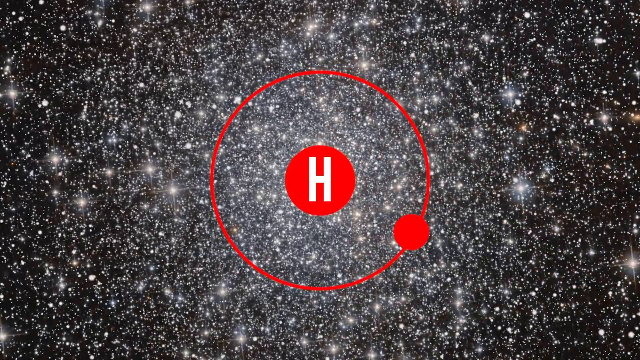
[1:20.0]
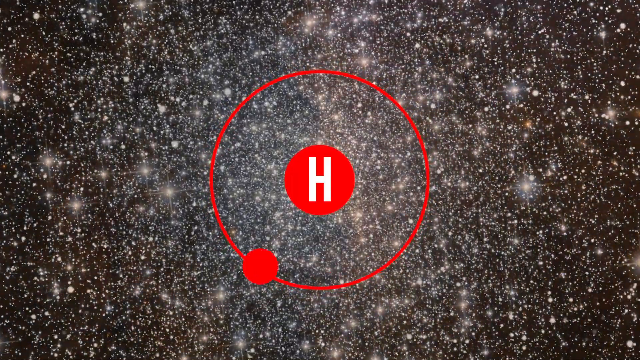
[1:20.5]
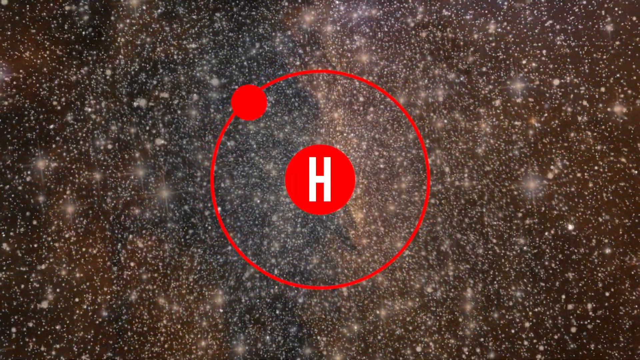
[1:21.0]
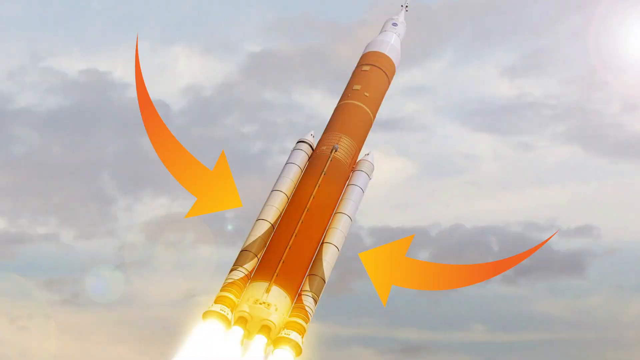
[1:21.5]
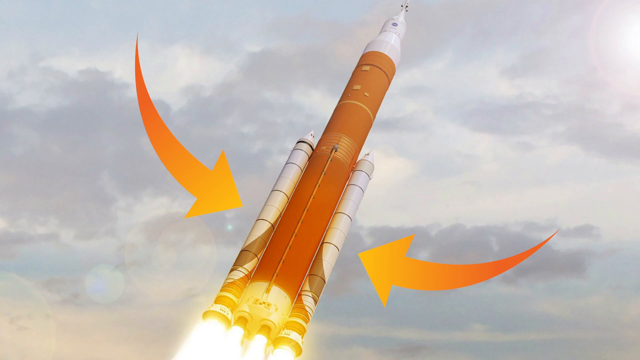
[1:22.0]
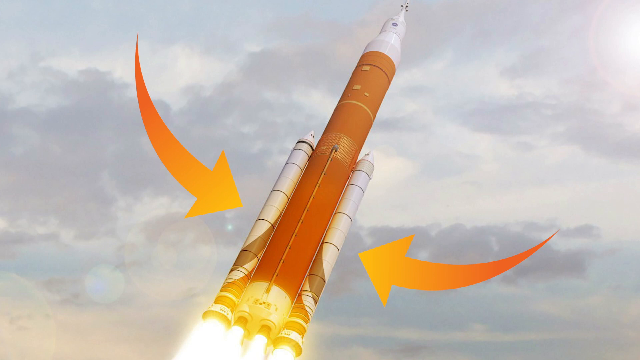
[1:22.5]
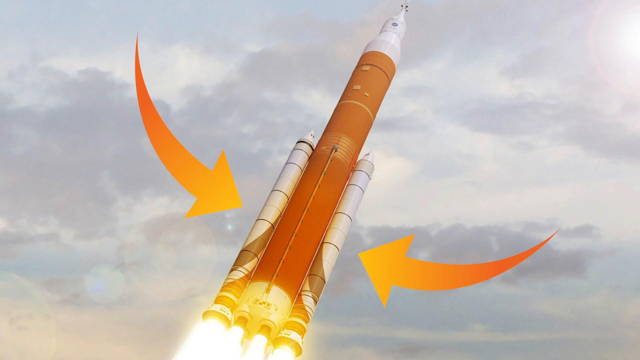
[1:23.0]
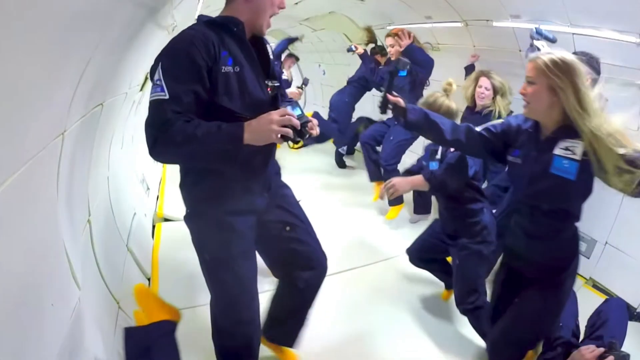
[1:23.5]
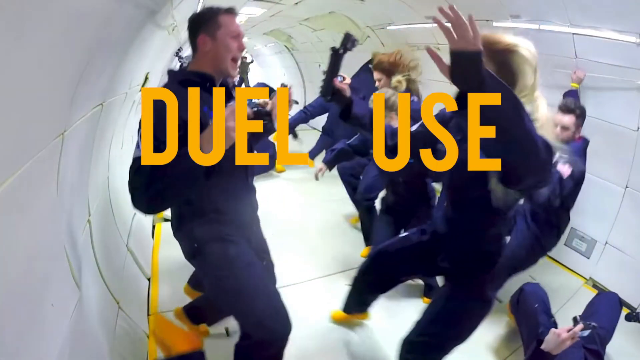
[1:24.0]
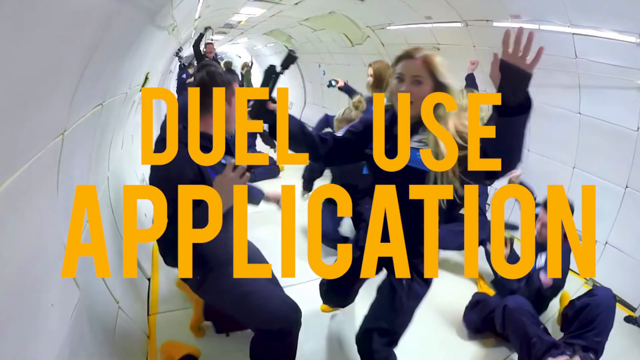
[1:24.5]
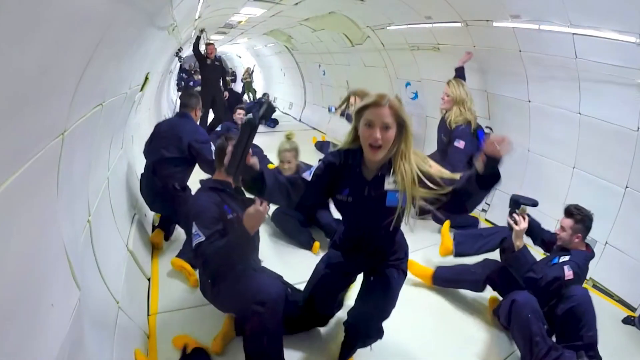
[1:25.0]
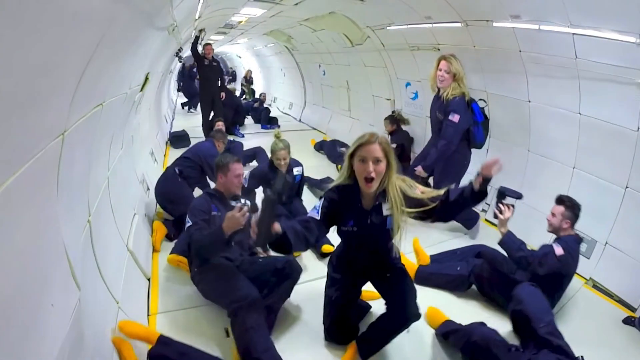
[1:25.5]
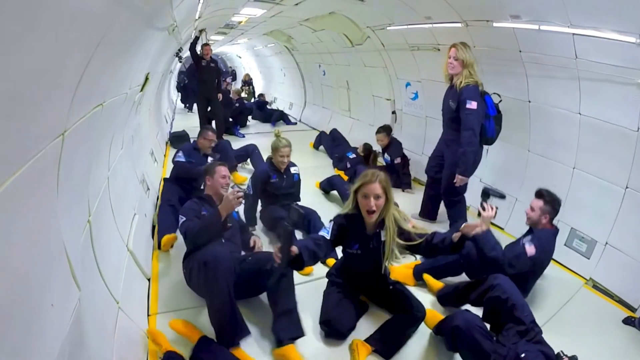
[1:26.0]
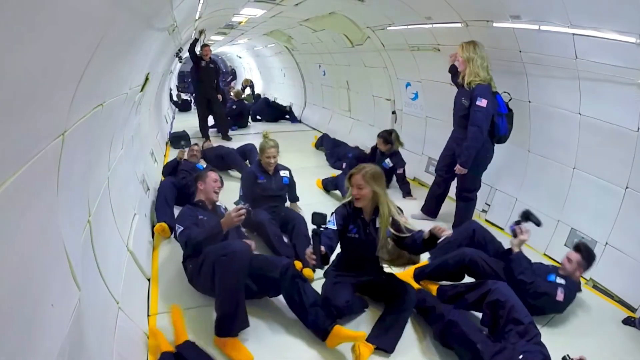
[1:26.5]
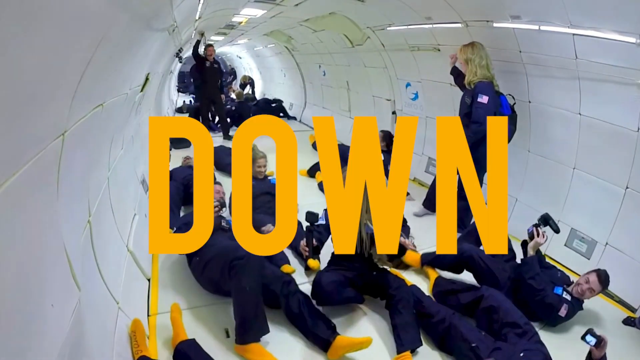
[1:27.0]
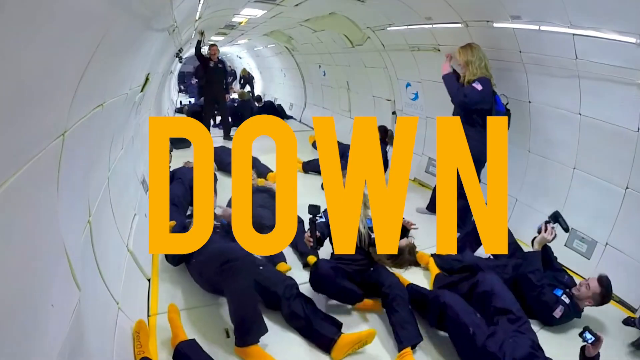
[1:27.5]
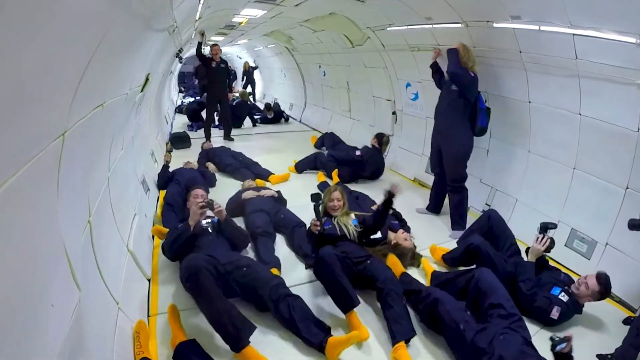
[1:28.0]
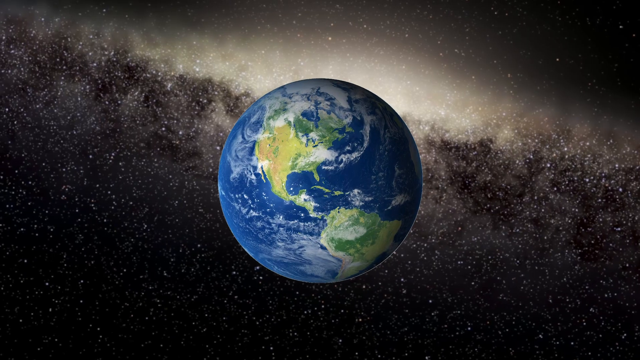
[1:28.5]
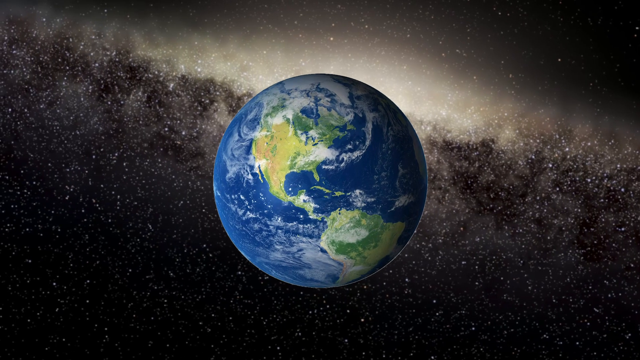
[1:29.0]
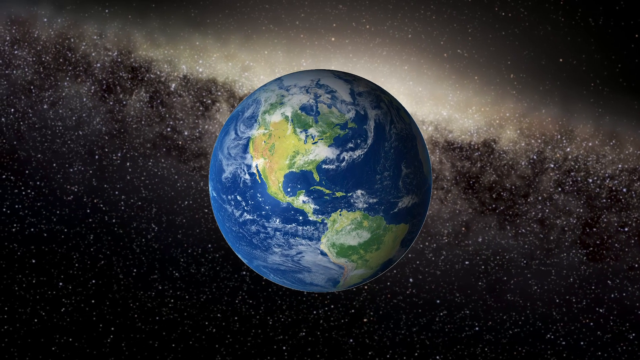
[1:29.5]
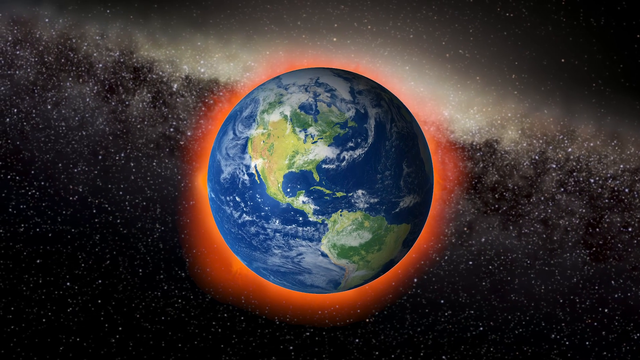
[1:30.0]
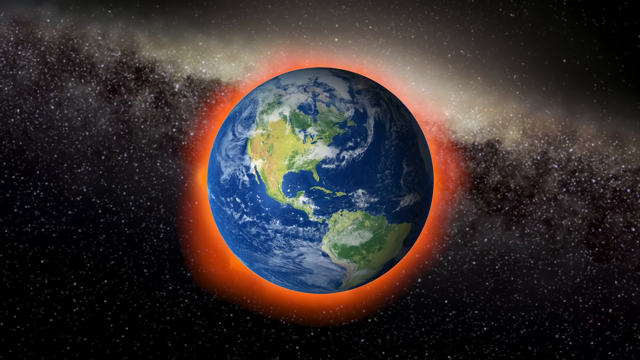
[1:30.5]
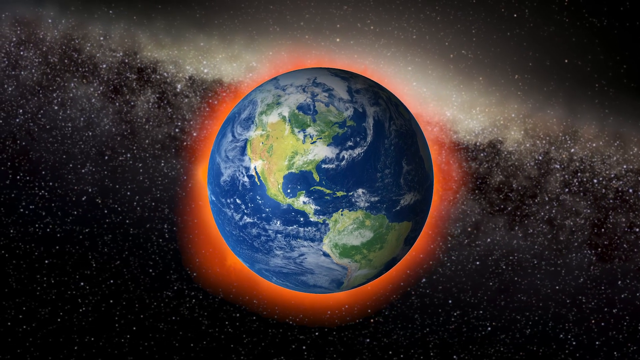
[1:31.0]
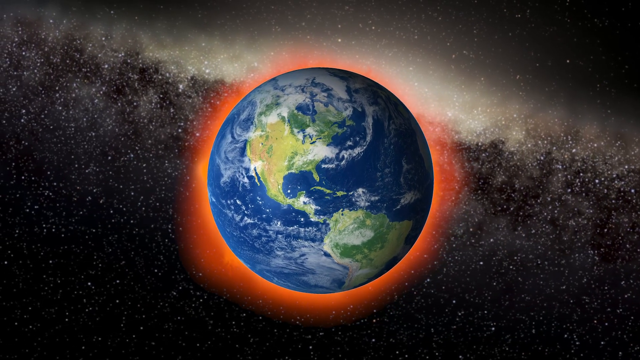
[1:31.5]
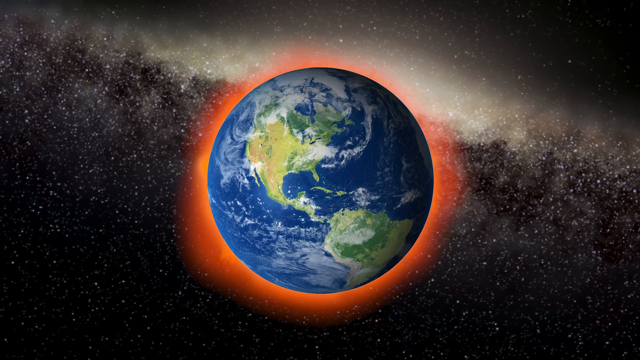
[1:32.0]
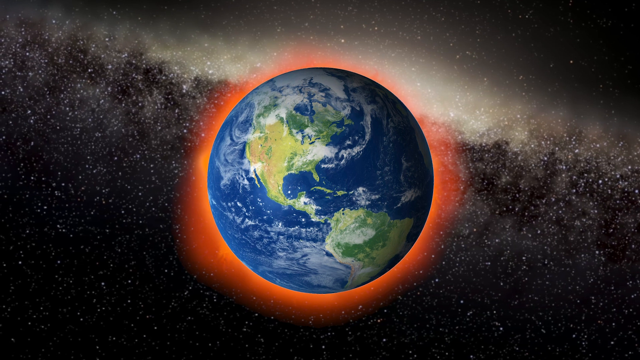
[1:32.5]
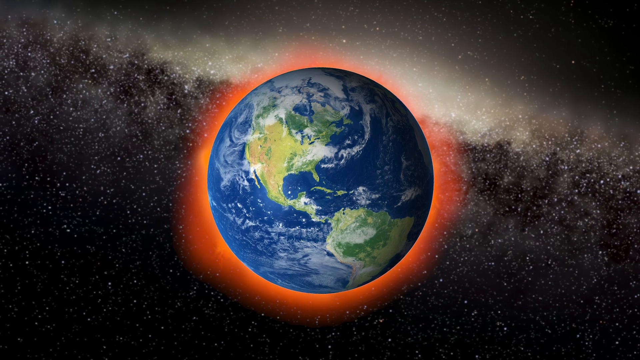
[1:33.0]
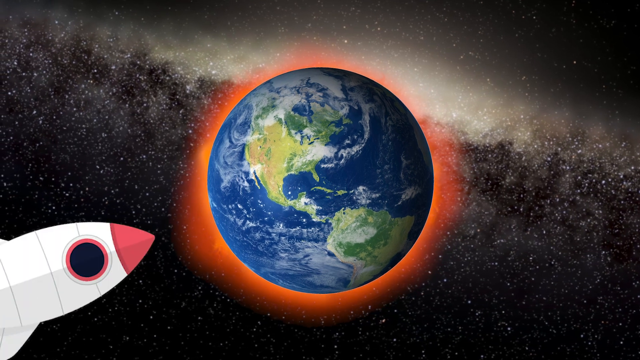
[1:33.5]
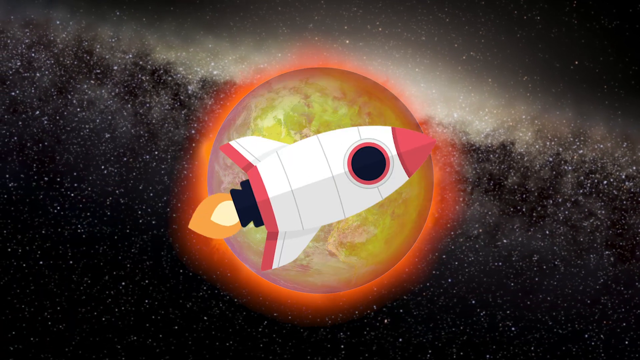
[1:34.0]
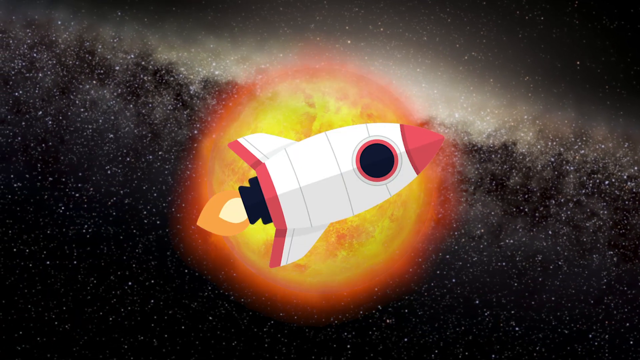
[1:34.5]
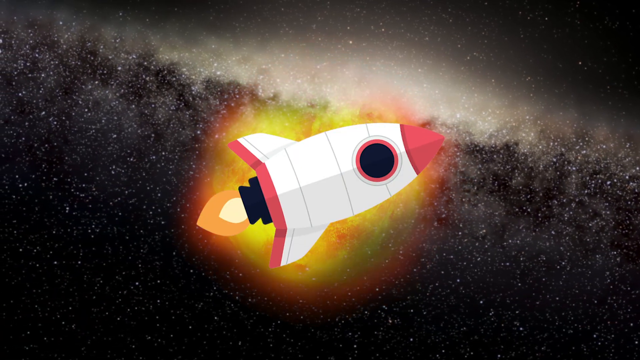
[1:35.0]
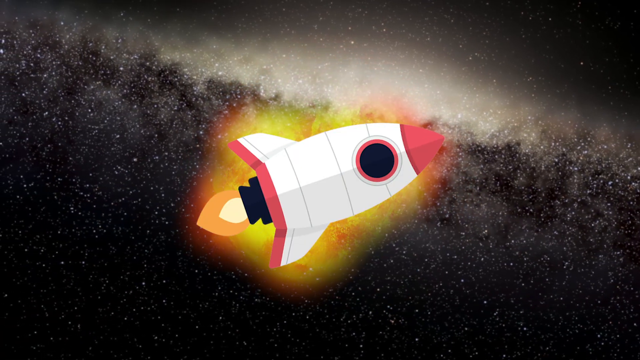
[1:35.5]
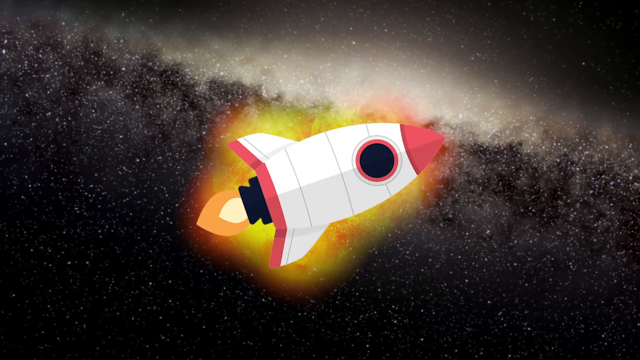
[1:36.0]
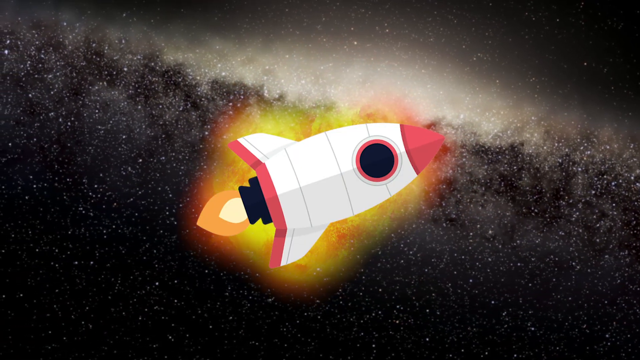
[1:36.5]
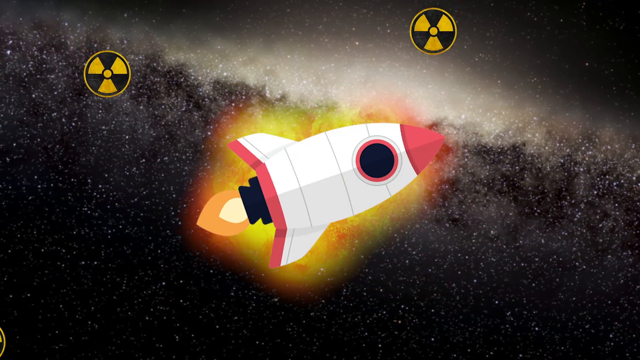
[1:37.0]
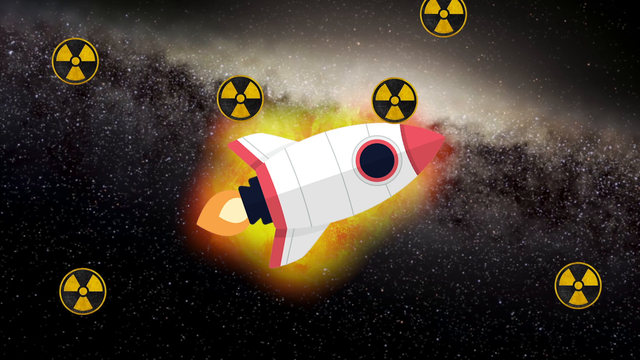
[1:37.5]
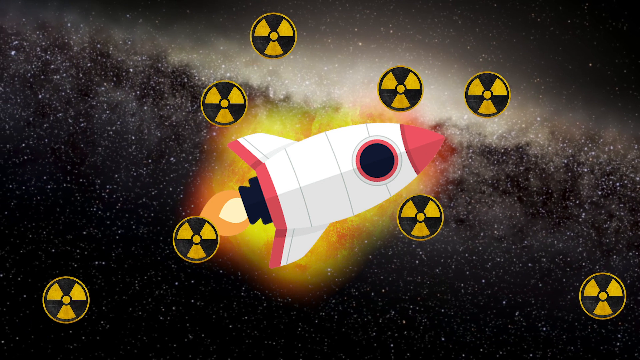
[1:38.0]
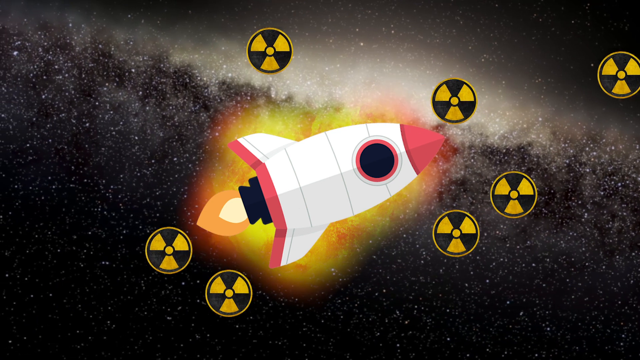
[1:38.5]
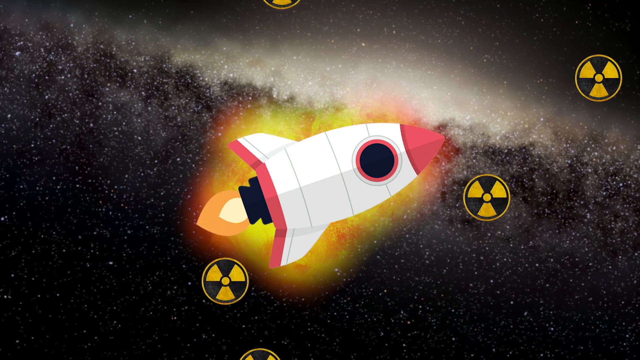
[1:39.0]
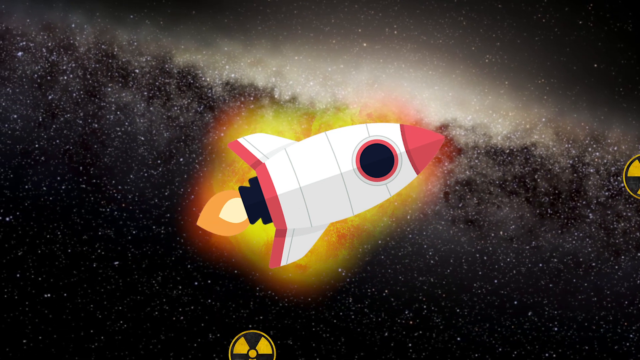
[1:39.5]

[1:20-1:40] A hydrogen symbol is in the middle with many bright stars in the background. A still image of a brown and white spaceship rocket appears, tilted to the right, with two arrows pointing to the side parts of the rocket. The scene changes to many people in zero gravity wearing blue jumpsuits, apparently in a space station, with white walls and a white floor. The word "down" appears in the middle. Next is a globe of the Earth with outer space in the background, and a red glowing light appears around the Earth. A rocket comes in from the bottom left corner and stops in the middle as the Earth burns up. The Earth disappears, and many black and yellow caution symbols surround the rocket and bounce off it.